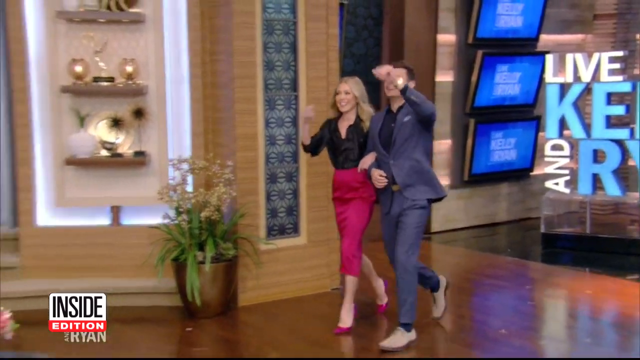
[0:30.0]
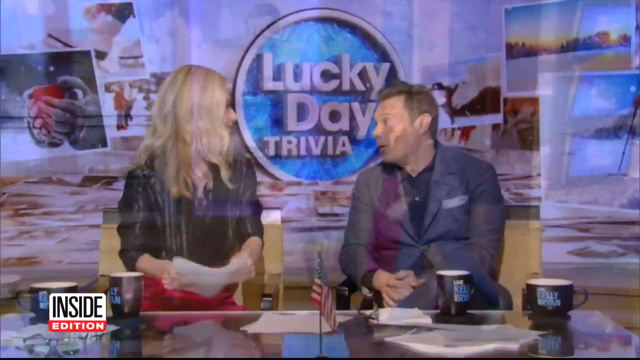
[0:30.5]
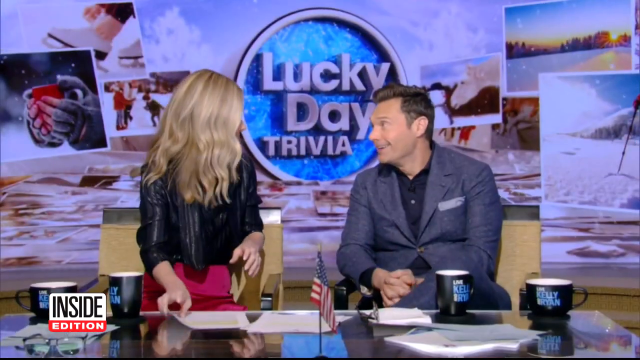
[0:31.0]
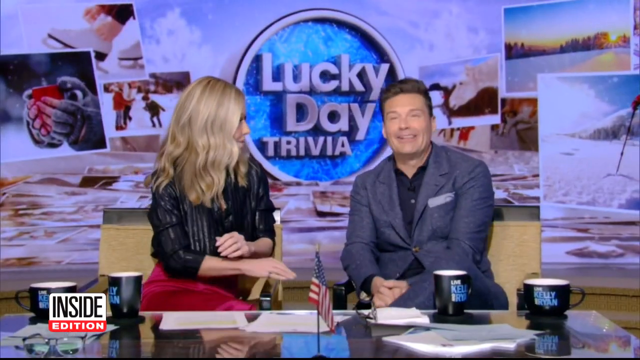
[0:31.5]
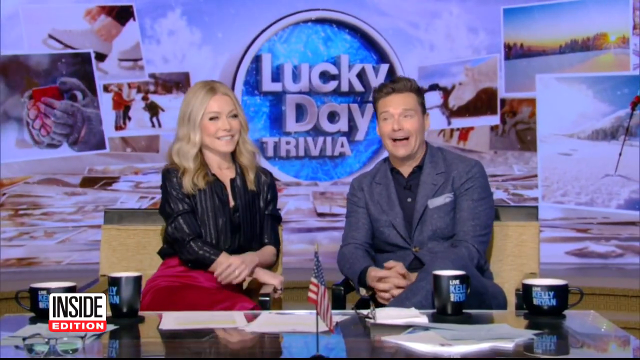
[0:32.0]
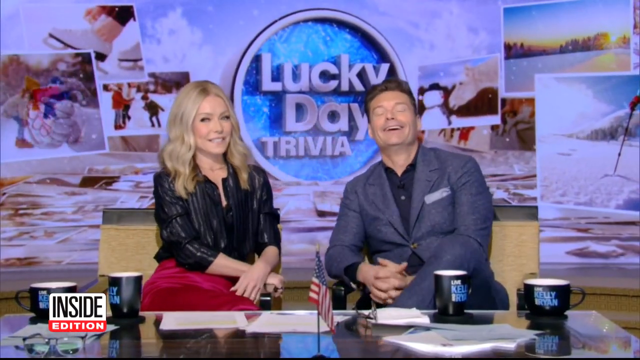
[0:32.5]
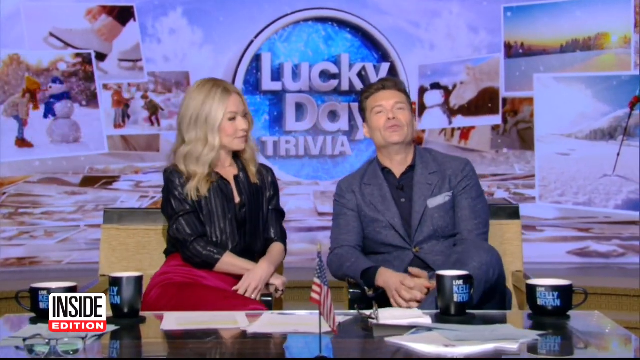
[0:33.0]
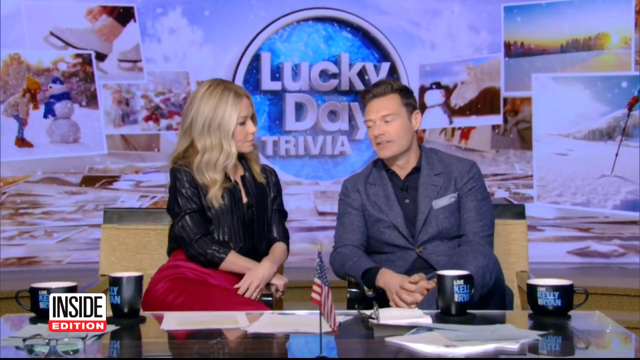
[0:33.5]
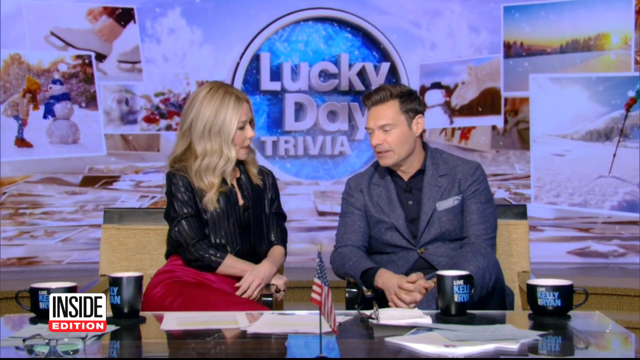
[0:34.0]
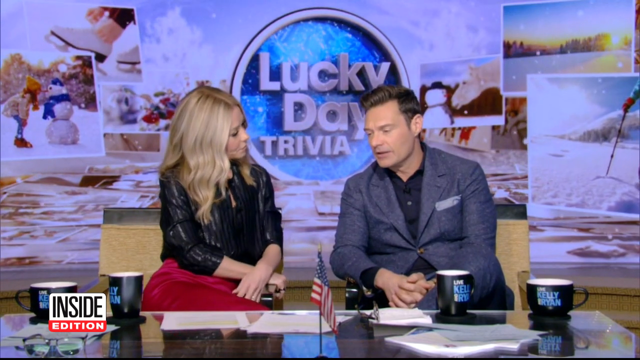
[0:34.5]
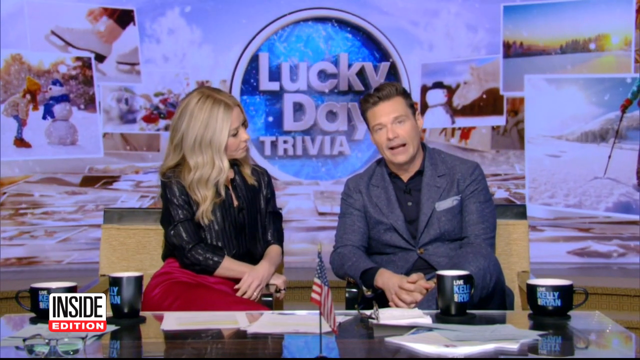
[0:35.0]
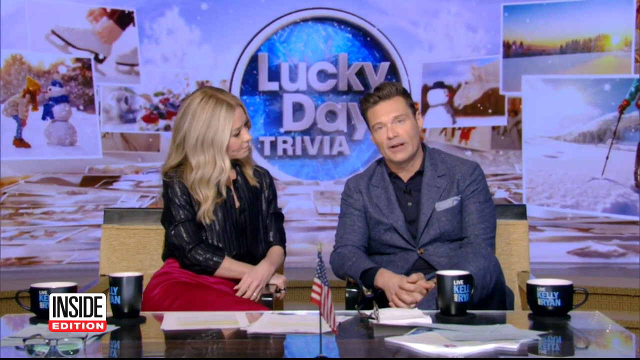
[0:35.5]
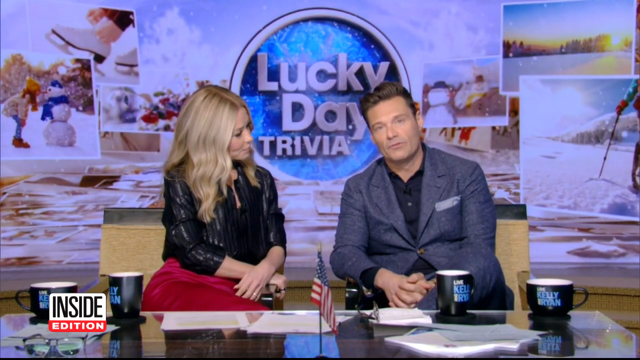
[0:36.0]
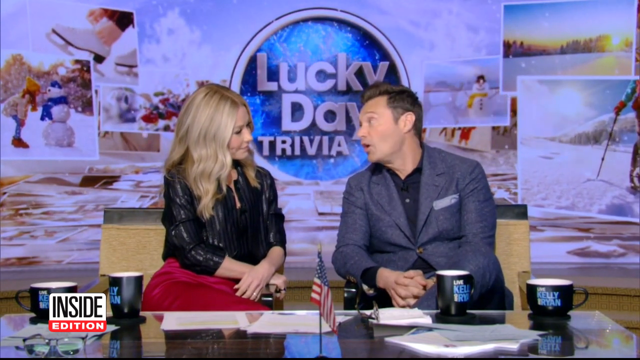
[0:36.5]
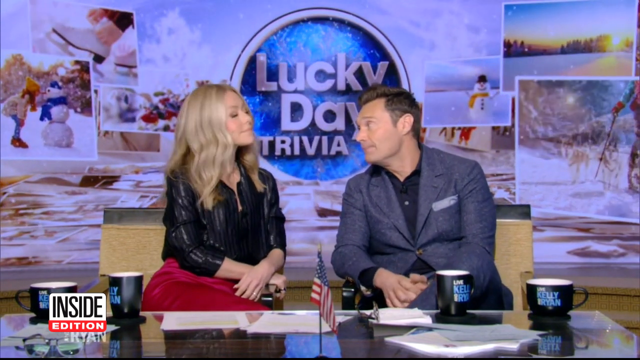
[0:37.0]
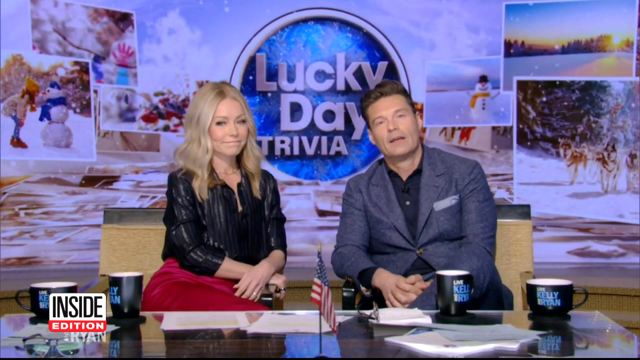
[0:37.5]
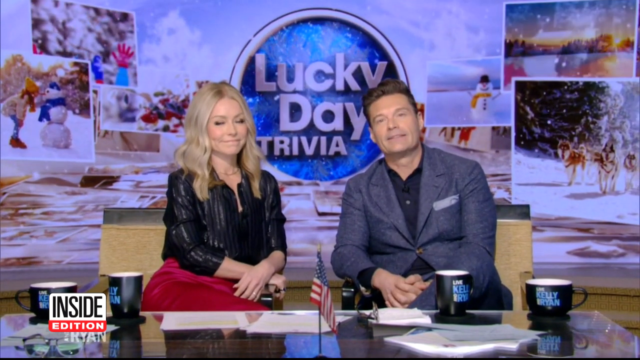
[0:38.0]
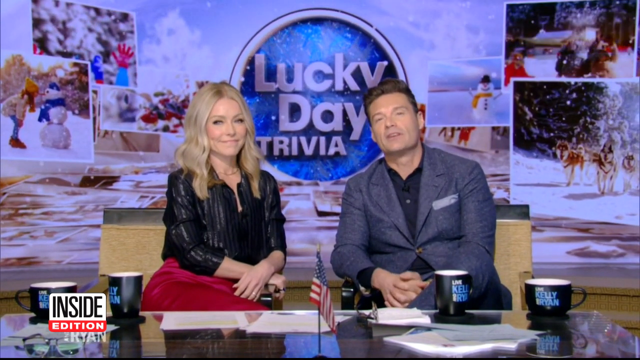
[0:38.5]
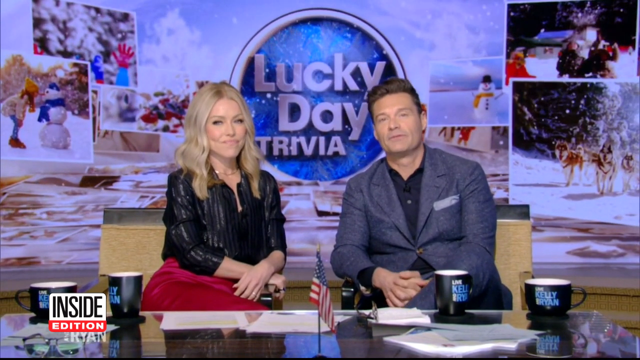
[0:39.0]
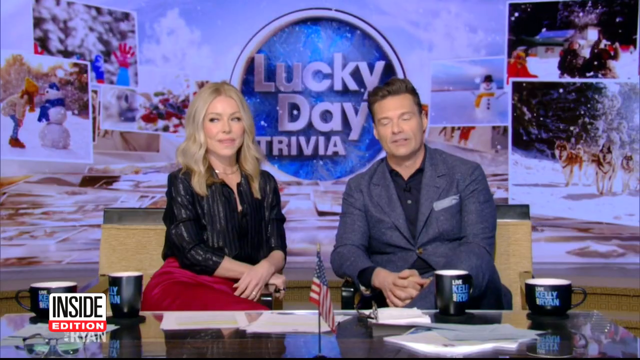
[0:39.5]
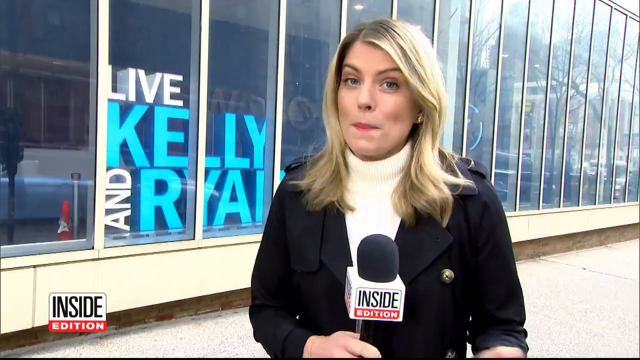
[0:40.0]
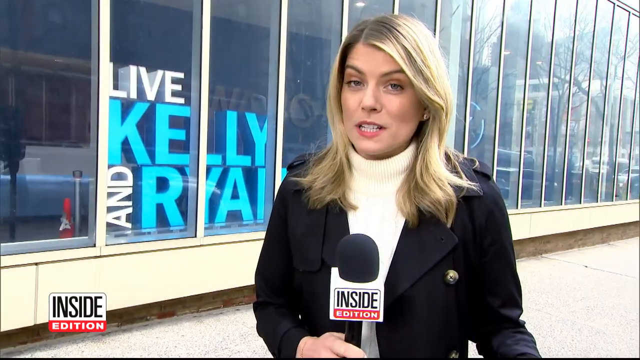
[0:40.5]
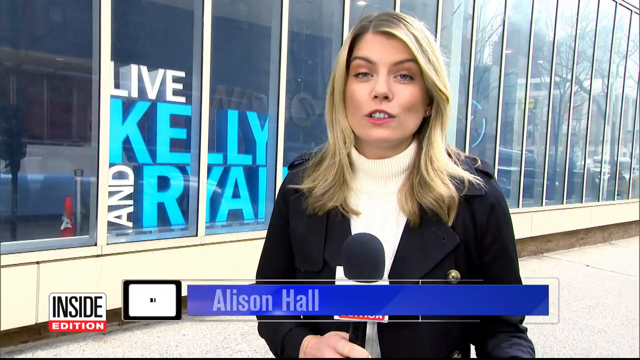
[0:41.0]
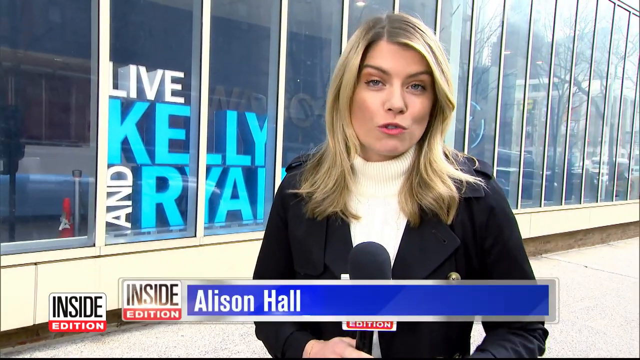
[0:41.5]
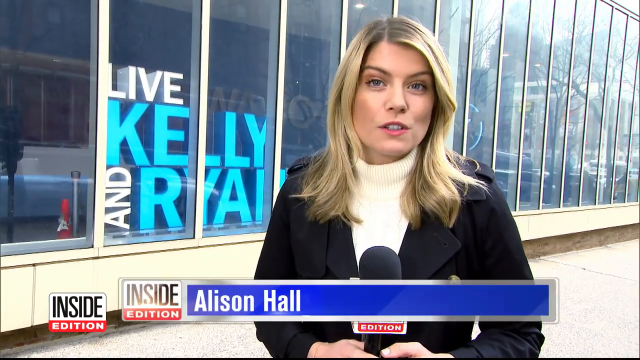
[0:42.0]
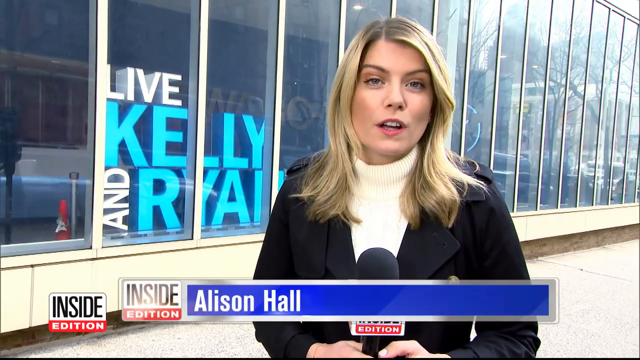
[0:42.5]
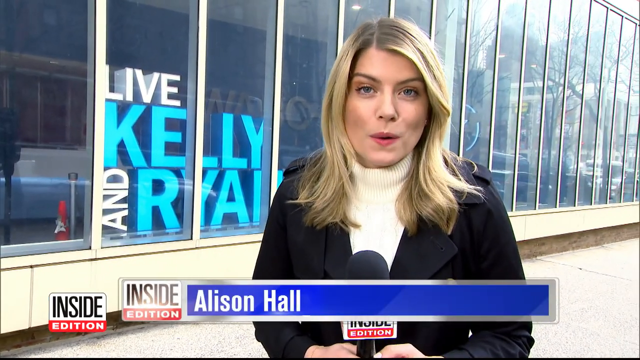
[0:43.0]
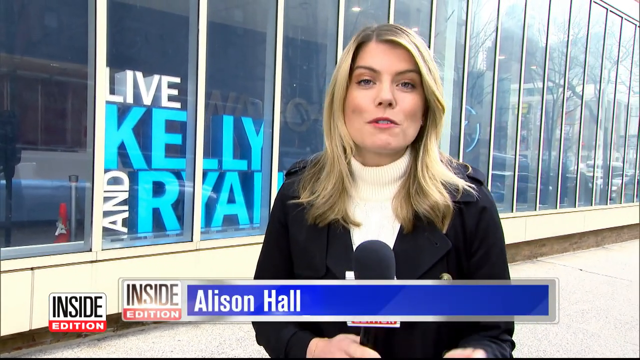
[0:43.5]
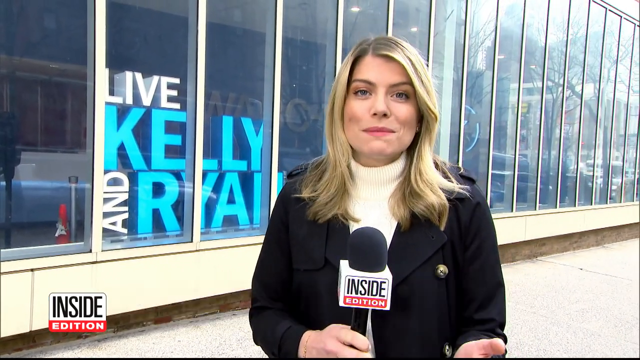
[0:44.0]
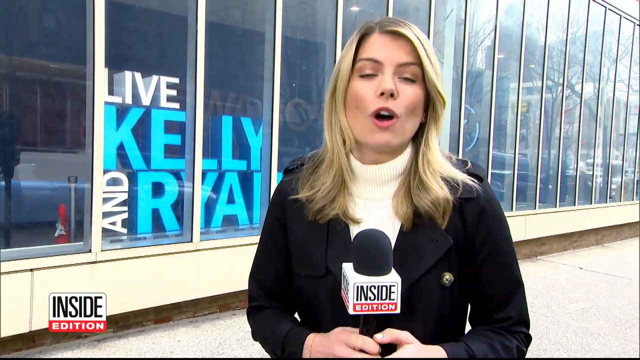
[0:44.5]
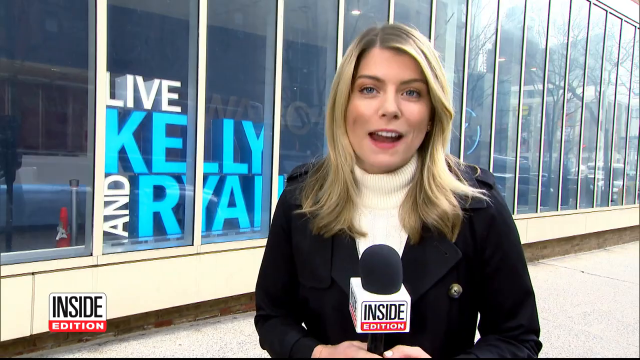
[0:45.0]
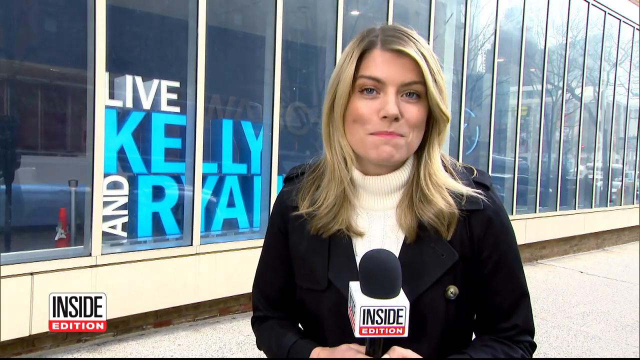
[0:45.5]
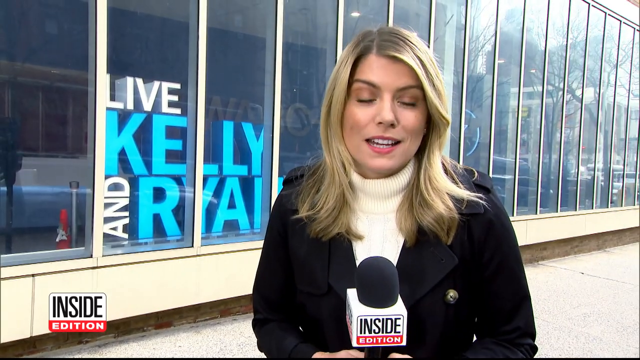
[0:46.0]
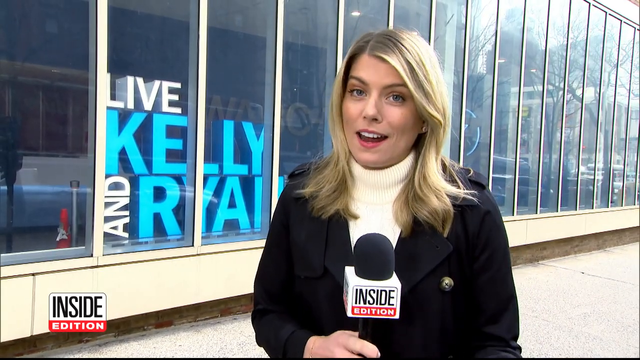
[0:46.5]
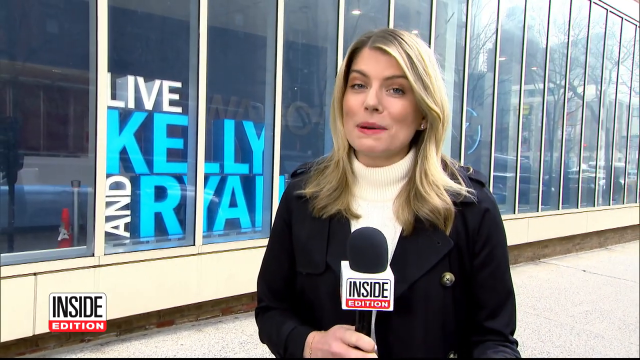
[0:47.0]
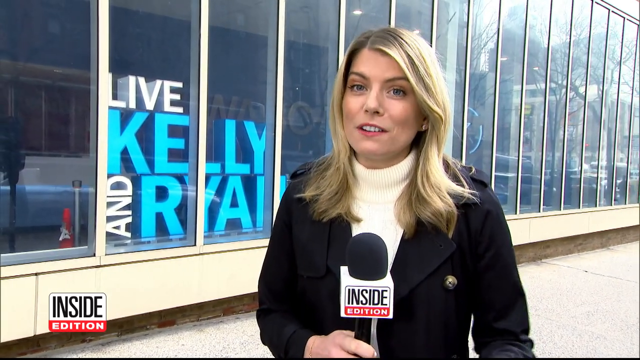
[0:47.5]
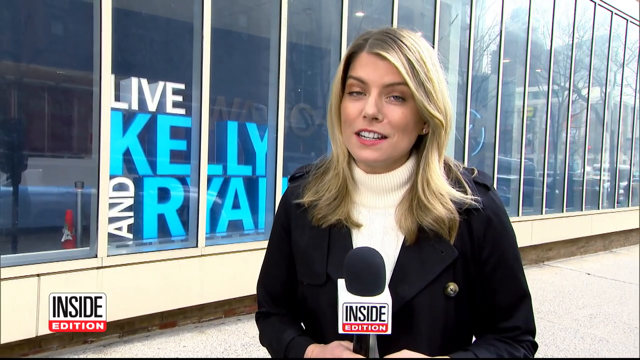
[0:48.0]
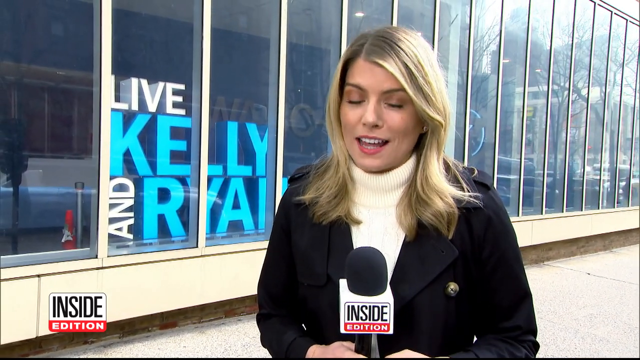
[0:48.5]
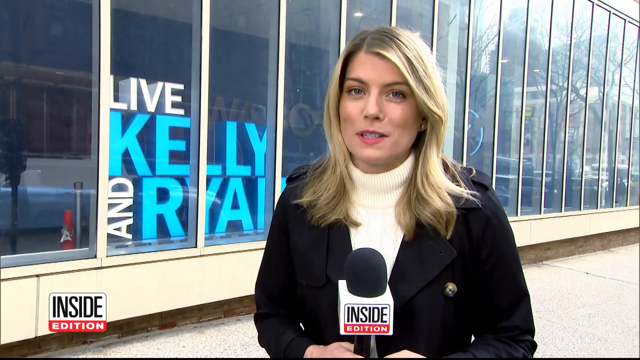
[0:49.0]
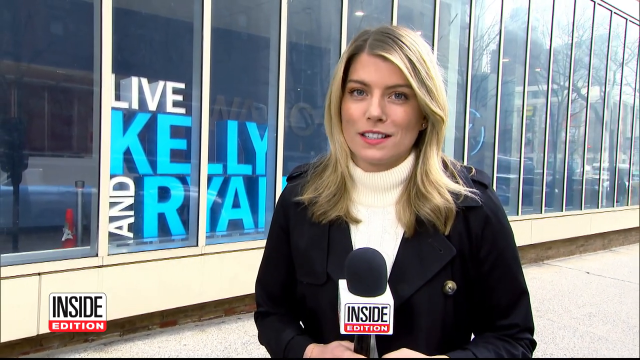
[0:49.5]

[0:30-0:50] Kelly Ripa and Ryan Seacrest sit in front of a large desk that has two mugs for each person and a small American flag sitting in the center. Behind them, a video display screen shows several photographs of different winter scenes, and the words "Lucky day trivia" are displayed in a blue circle directly between the two of them. The video then cuts to the outside of the talk show building, where another reporter speaks. She is a young white woman with blonde hair and blue eyes, wearing a cream-colored turtleneck sweater with a black peacoat or trench coat over it. She speaks into a microphone with "Inside Edition" written on it, and a caption labels her as "Alison Hall". She speaks directly to the camera before the video cuts back to another shot of Kelly Ripa and Ryan Seacrest sitting at their talk show desk.